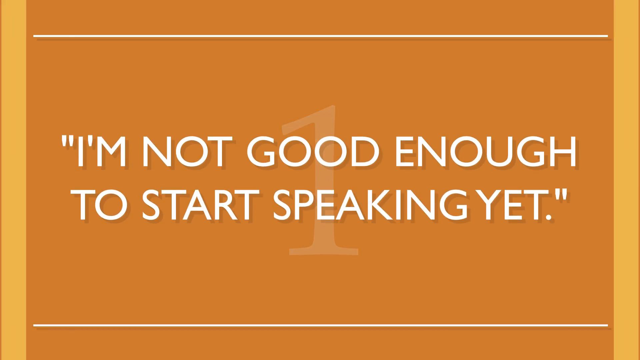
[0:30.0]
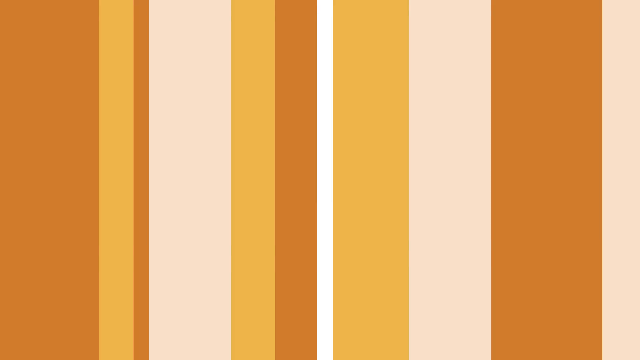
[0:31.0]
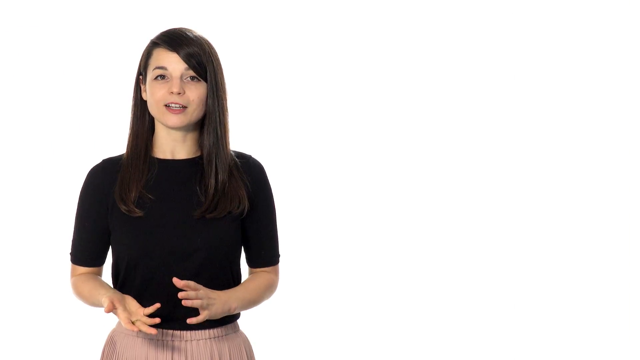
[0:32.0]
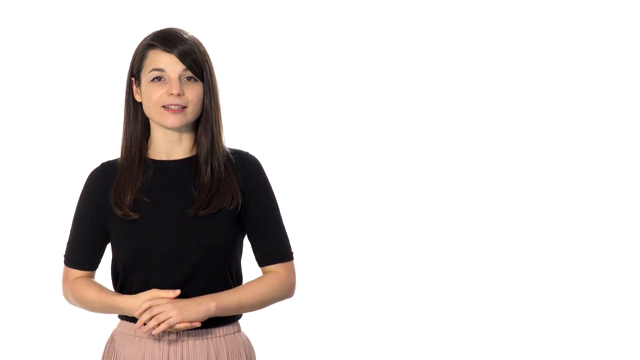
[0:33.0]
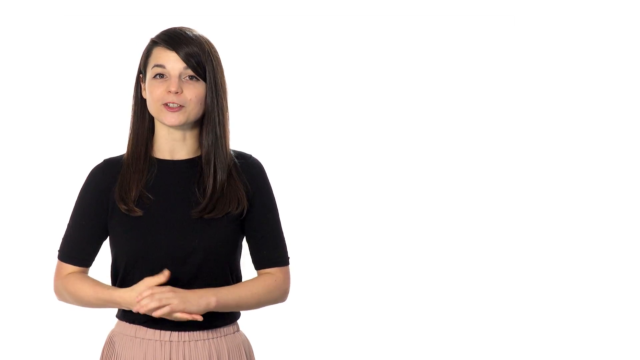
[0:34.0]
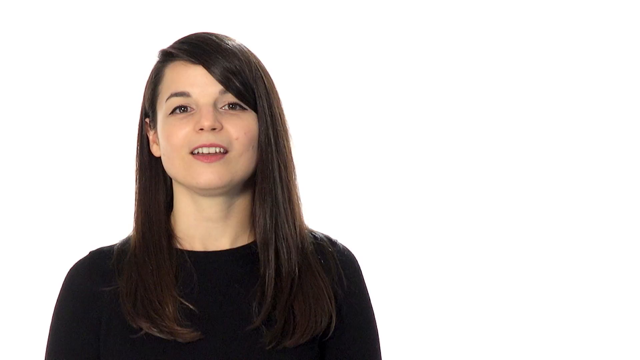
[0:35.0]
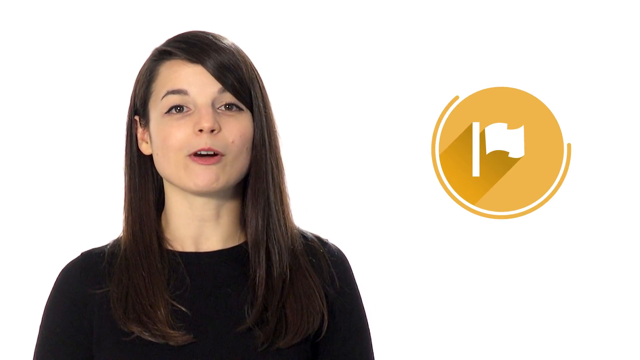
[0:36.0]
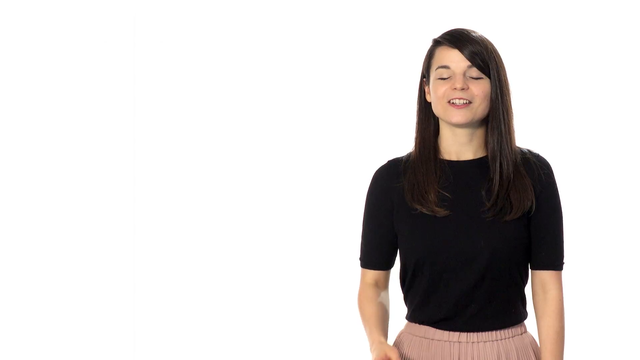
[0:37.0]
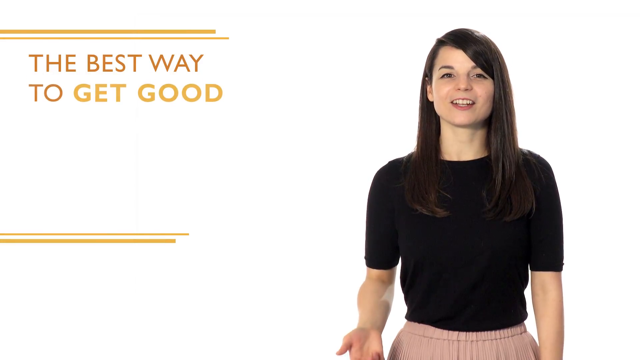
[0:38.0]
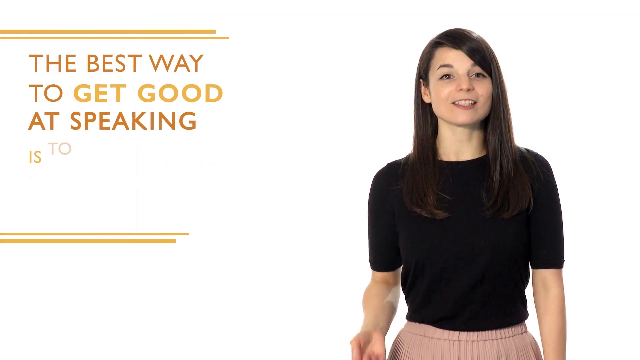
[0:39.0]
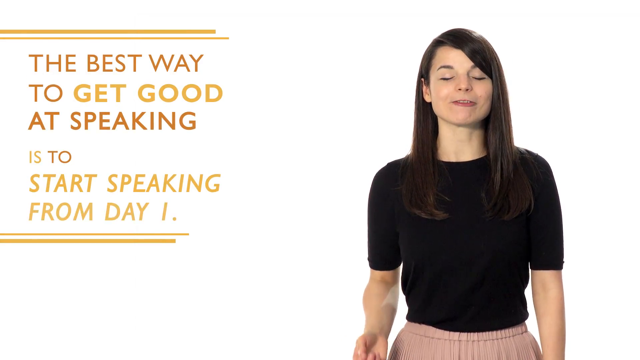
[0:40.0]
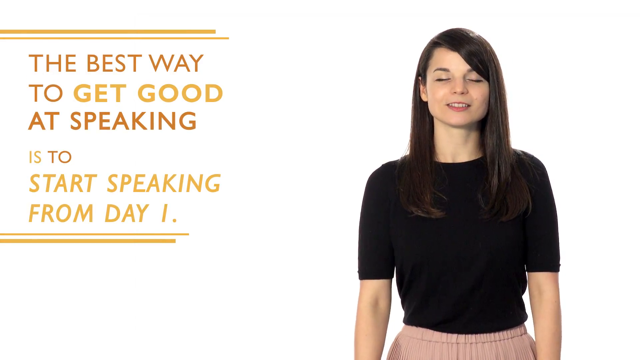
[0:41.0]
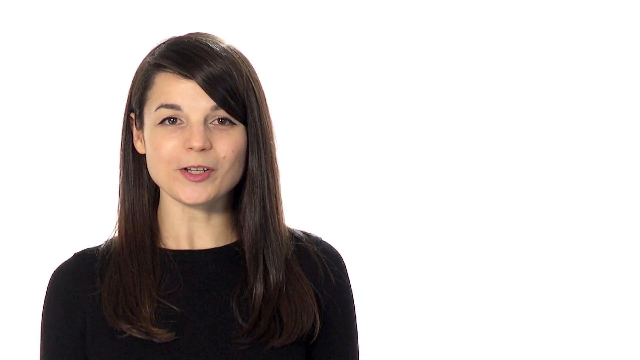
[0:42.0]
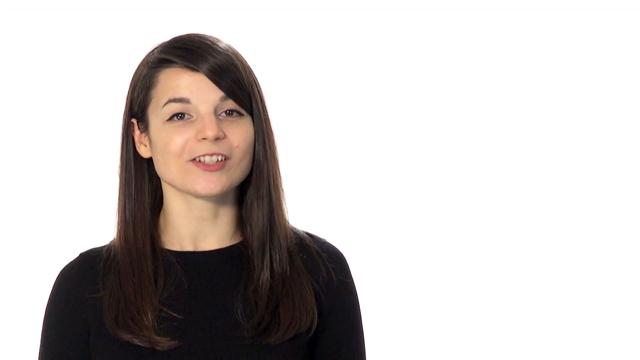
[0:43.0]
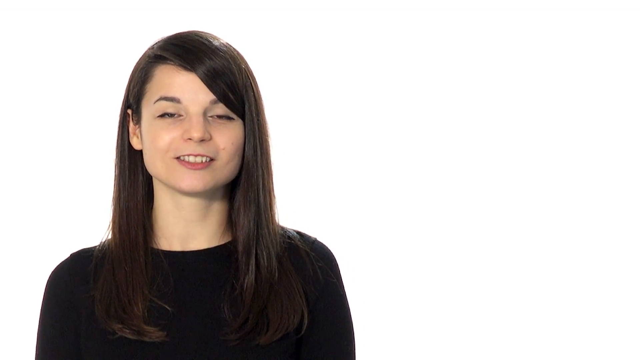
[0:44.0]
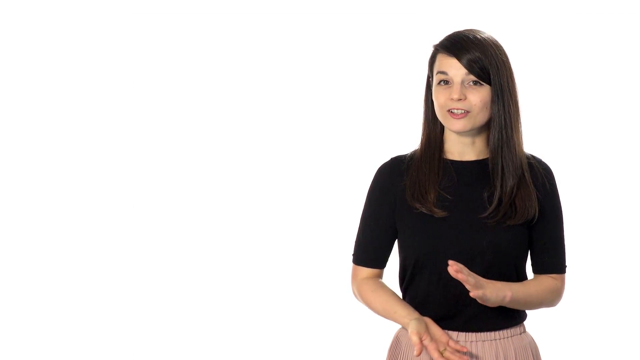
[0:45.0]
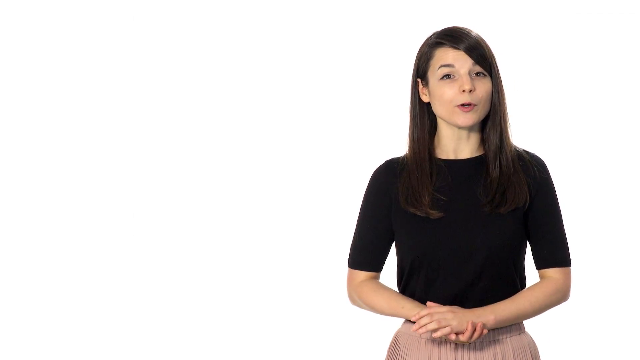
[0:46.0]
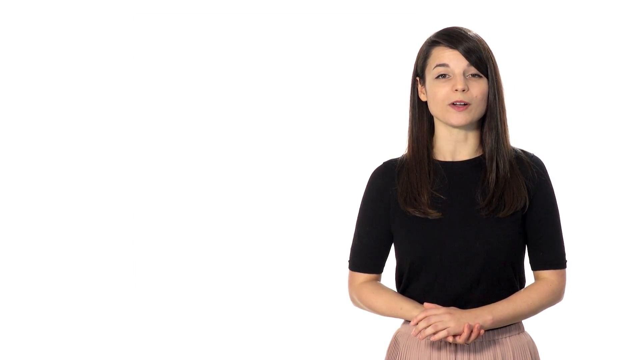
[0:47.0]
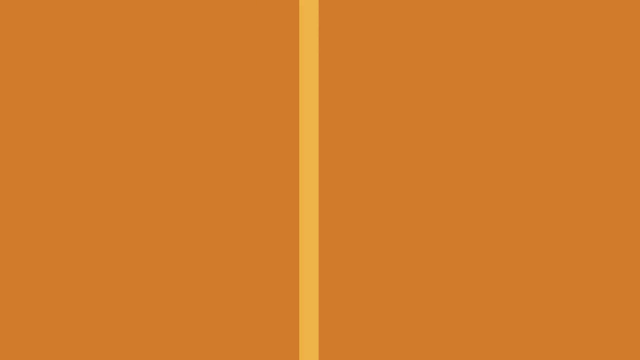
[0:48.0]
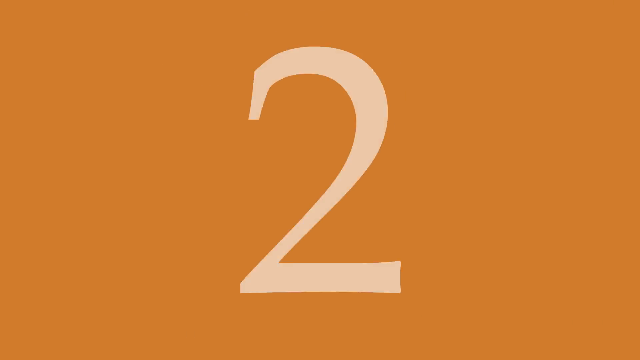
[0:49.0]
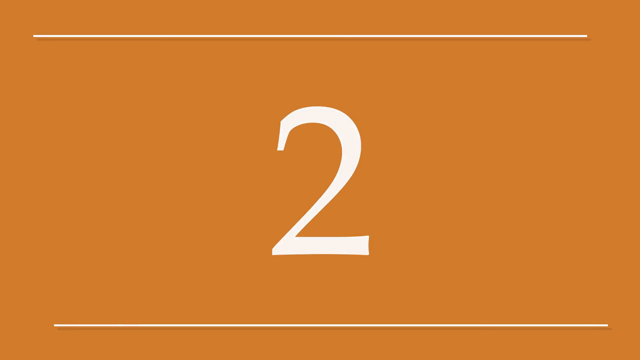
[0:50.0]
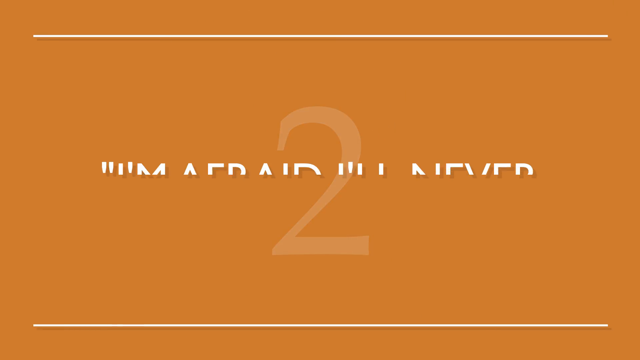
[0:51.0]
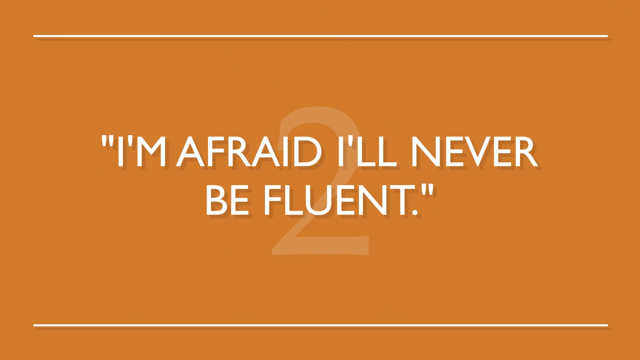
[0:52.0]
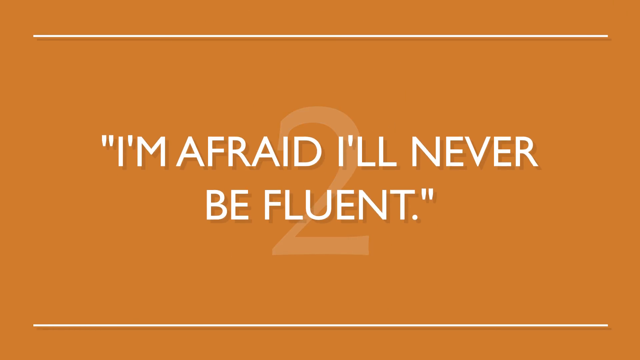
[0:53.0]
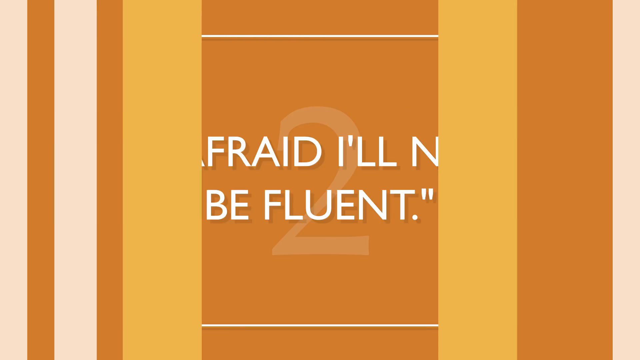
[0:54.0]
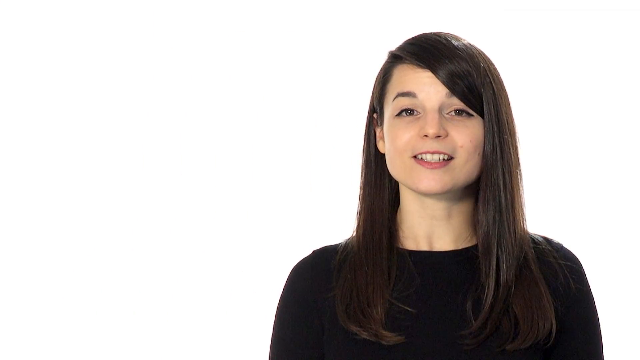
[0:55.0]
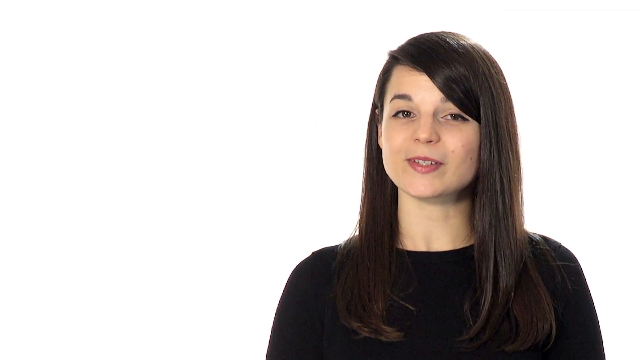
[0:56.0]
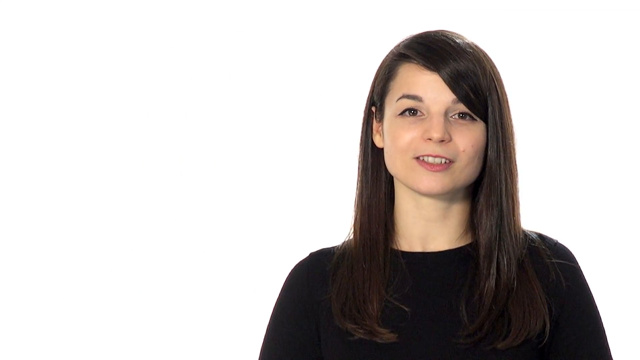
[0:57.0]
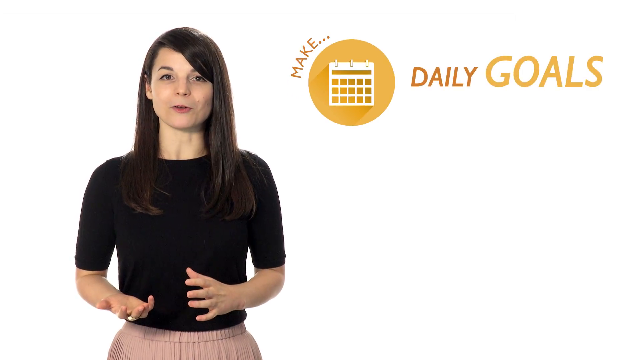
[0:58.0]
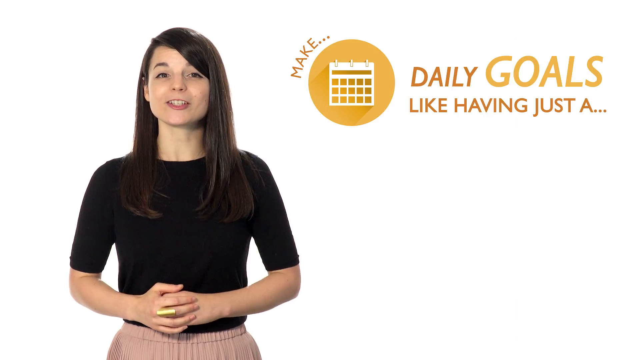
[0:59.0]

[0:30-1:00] A woman presents before a whiteboard, apparently explaining a topic. Text then appears with the title "top four language learning fears according to our users"; "top four" is underlined, and the whole text is bold on a yellow background. She stays on this for some time. A numbered list then appears, and number one reads "I am not good enough to start speaking yet." The woman elaborates on it for some time, then a written solution appears that reads "the best way to get good at speaking is to start speaking from day one."